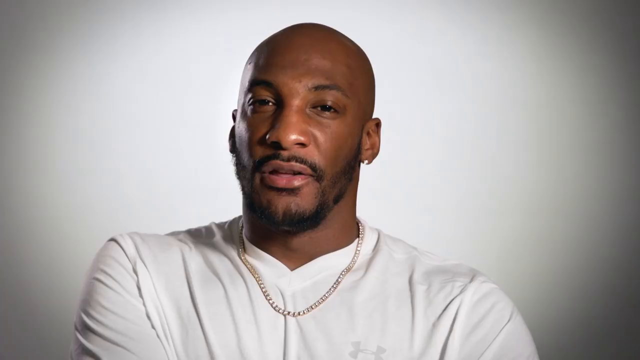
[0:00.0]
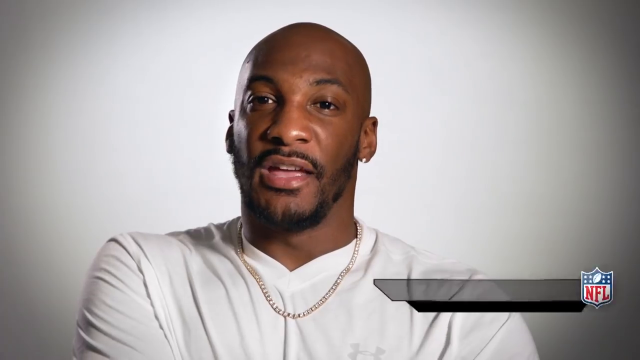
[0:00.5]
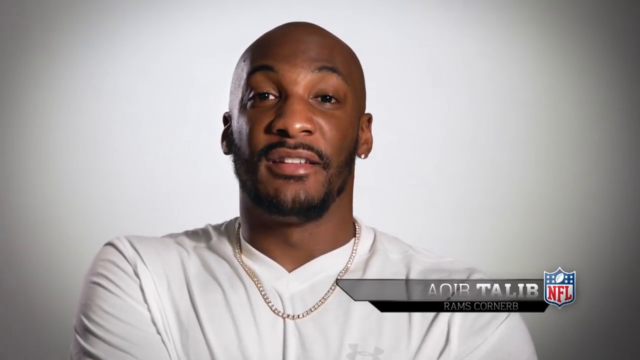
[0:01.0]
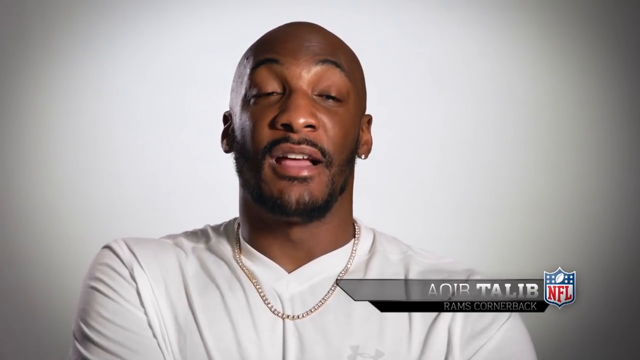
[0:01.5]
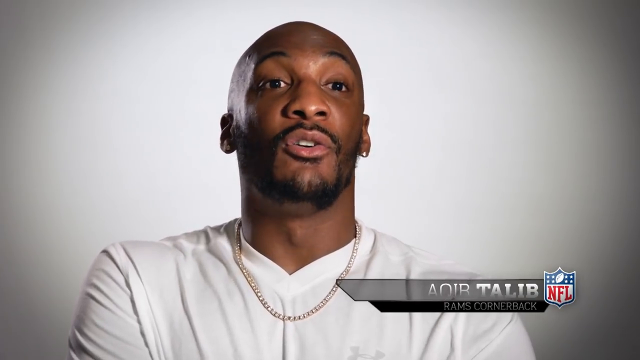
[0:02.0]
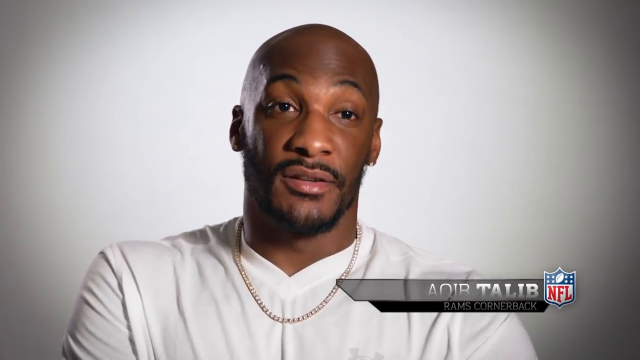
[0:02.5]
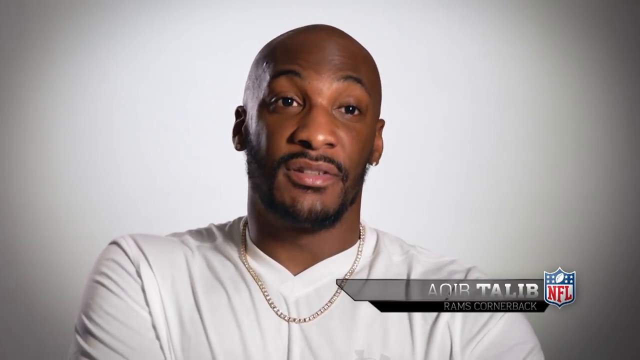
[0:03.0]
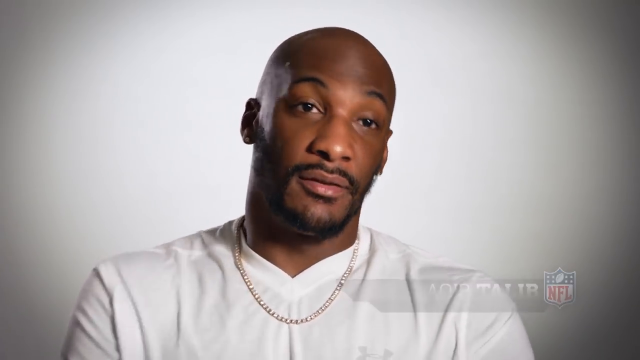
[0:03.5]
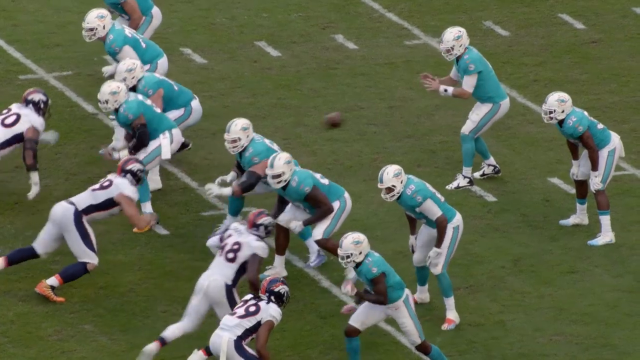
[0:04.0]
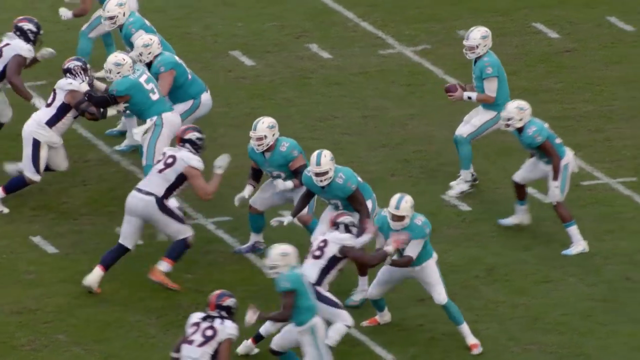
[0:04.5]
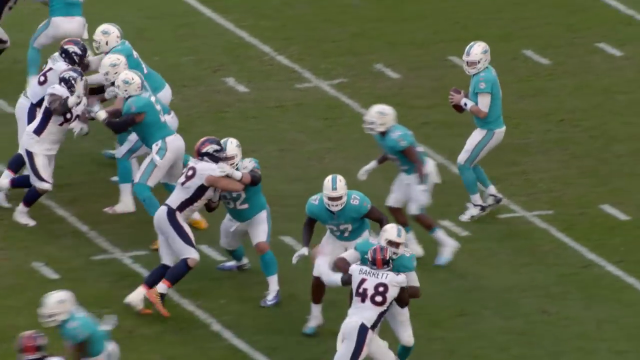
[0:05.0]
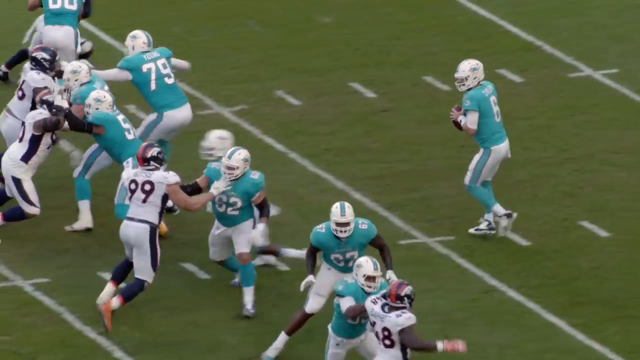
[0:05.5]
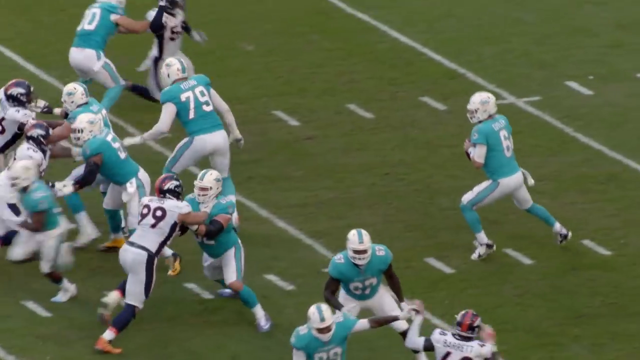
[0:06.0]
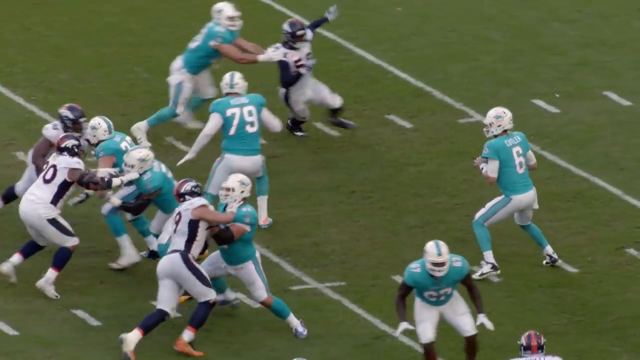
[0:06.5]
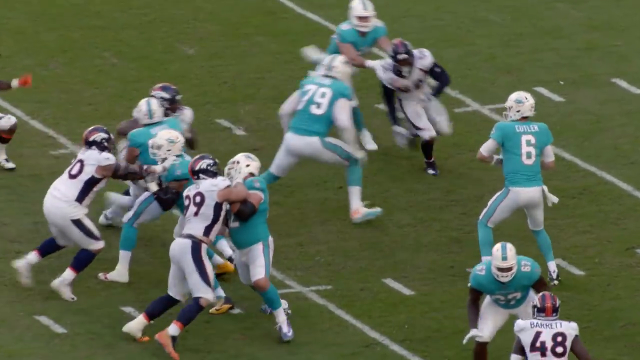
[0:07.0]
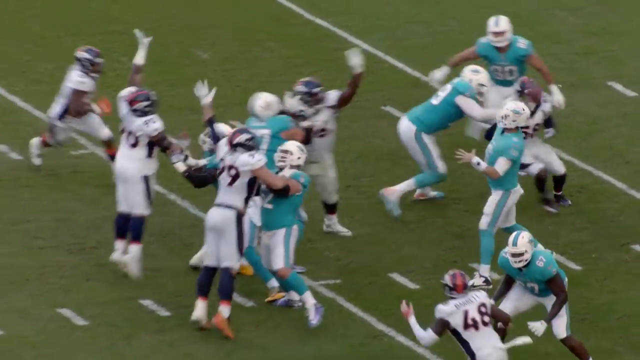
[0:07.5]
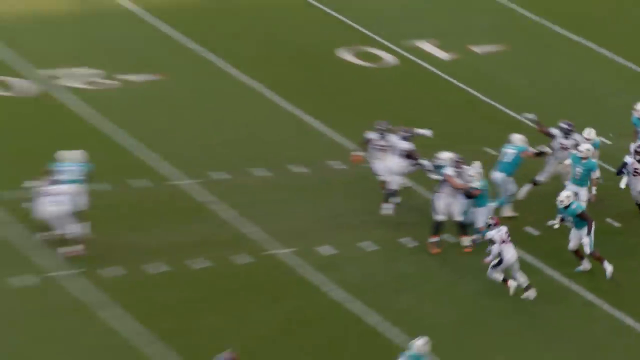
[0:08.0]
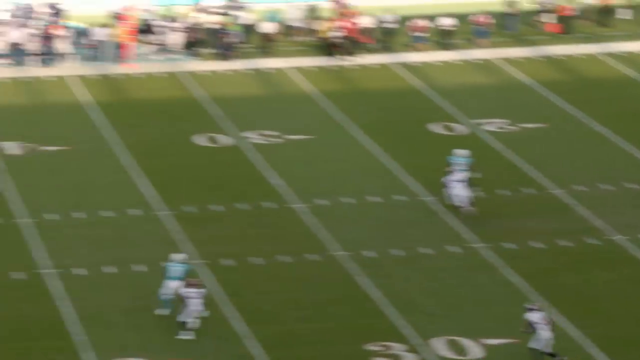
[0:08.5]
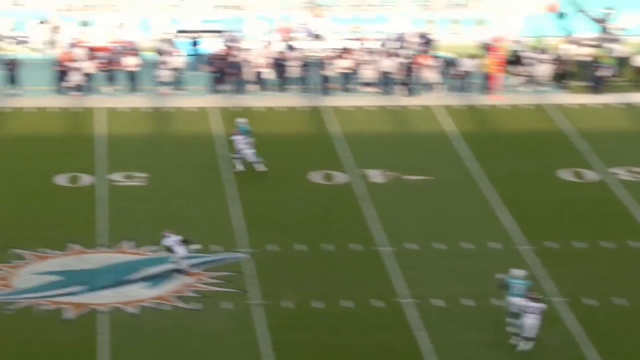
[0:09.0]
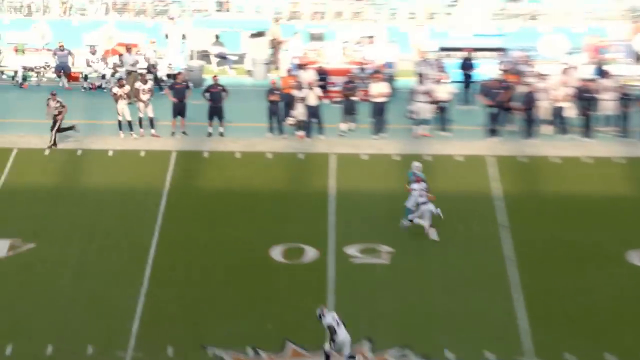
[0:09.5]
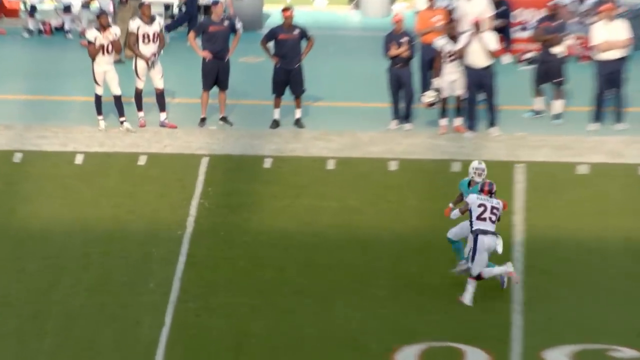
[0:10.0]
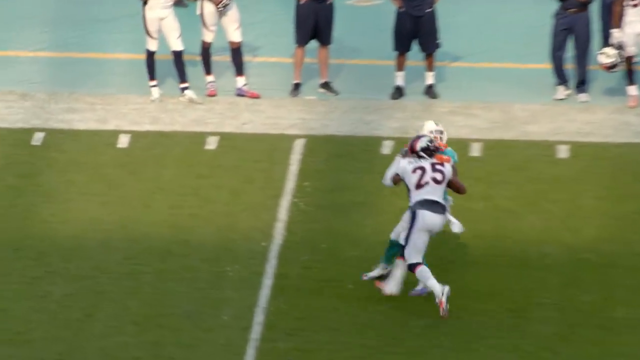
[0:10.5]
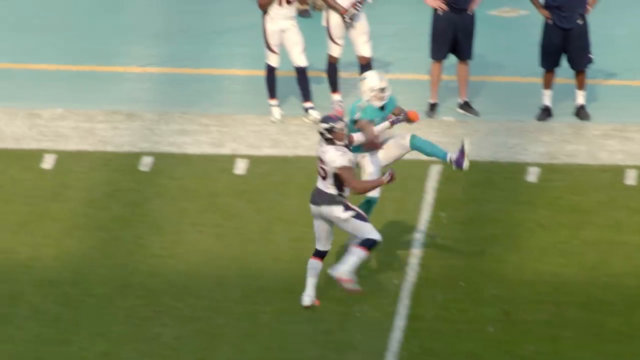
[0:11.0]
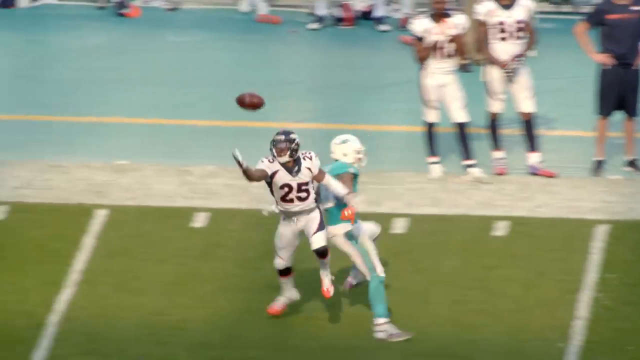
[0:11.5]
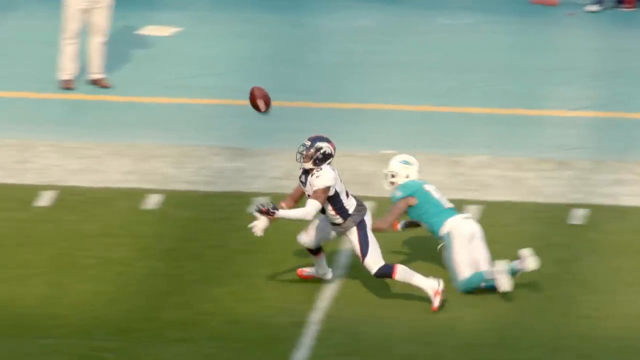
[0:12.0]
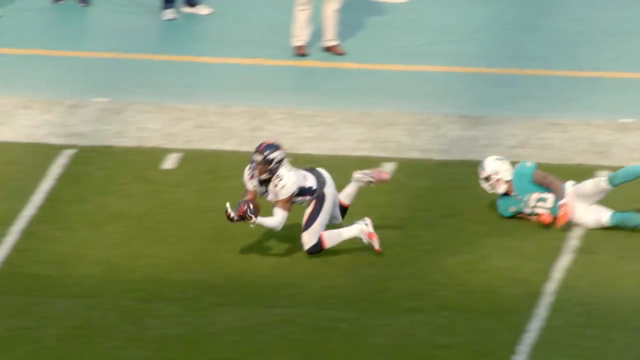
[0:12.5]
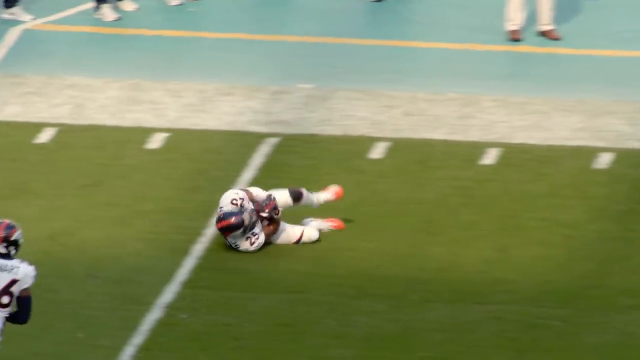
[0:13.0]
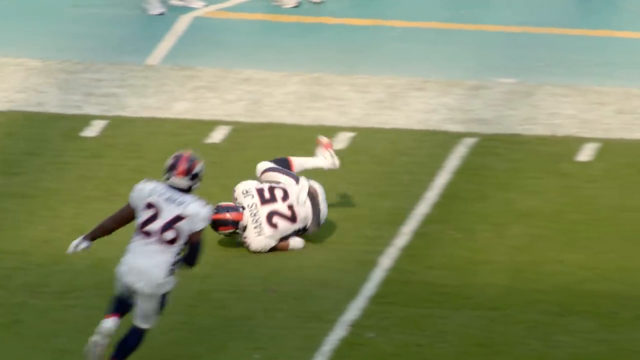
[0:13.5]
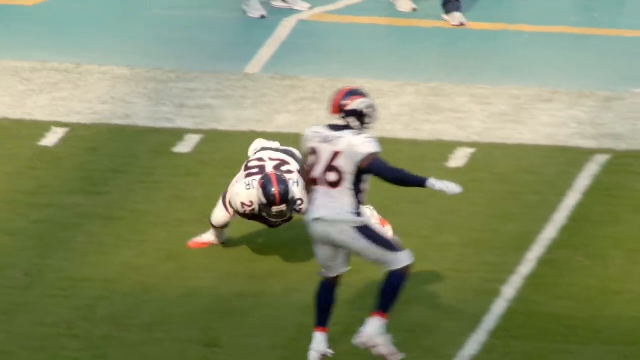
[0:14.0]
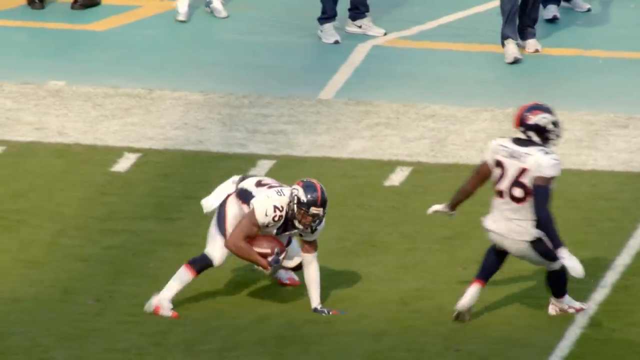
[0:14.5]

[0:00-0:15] A man talks into the camera. He is a Black man with a bald head and facial hair like a beard, wearing a white shirt and a diamond chain. On-screen text gives his name as "Aqib Talib" with "Rams cornerback" underneath, and the NFL logo is next to his name. The video cuts to game footage of the Miami Dolphins against the Denver Broncos. Jay Cutler, wearing number six at quarterback, drops back and throws a long pass, which is intercepted by a cornerback, Harris Jr., apparently Chris Harris Jr. Aqib Talib is possibly talking about this cornerback.